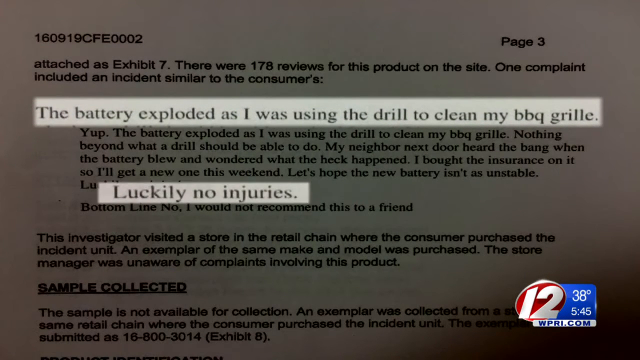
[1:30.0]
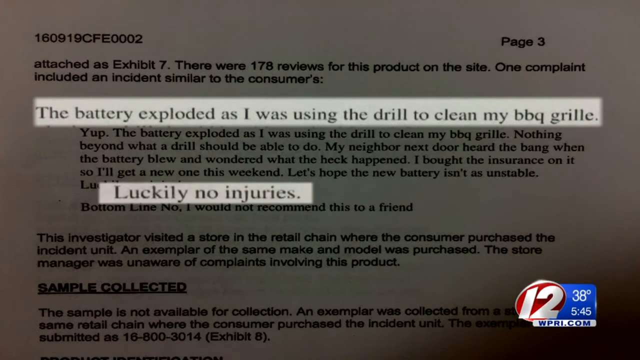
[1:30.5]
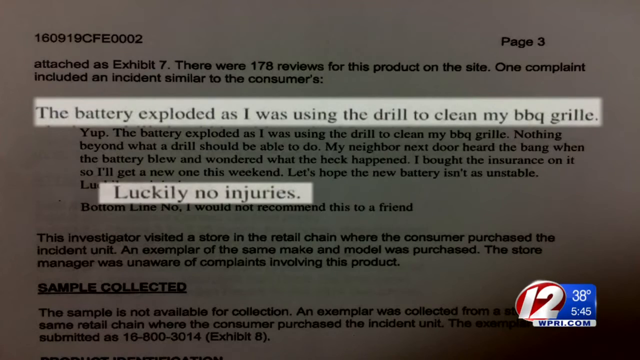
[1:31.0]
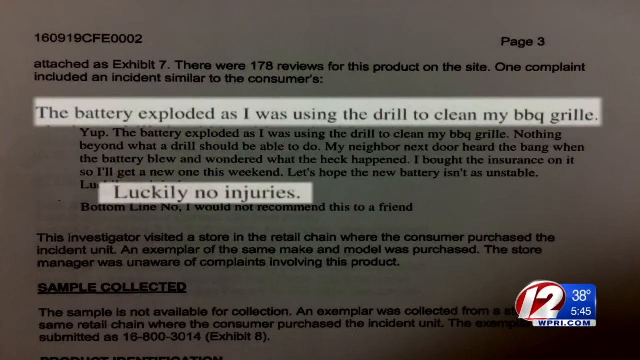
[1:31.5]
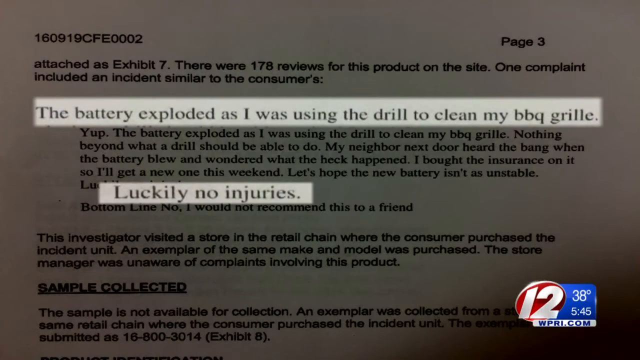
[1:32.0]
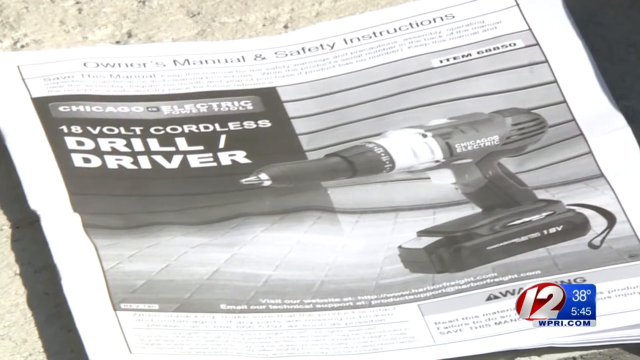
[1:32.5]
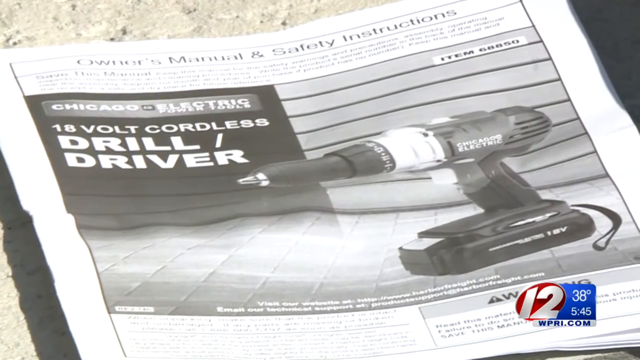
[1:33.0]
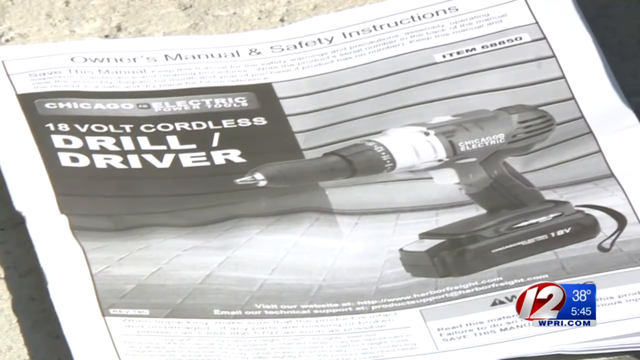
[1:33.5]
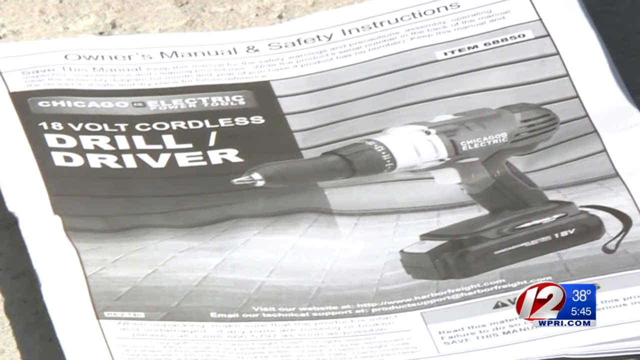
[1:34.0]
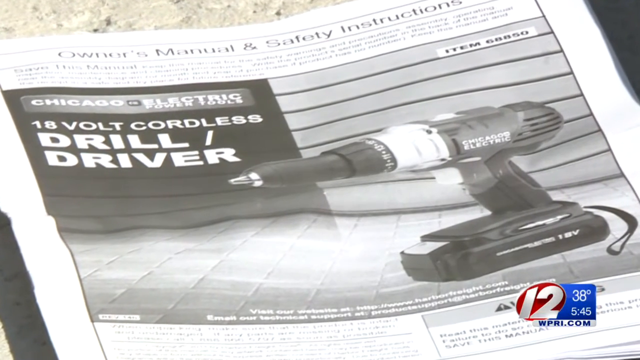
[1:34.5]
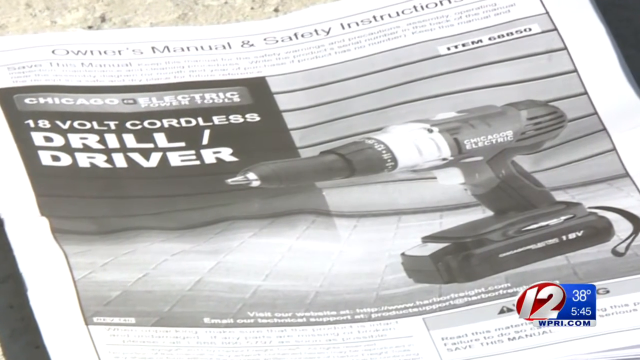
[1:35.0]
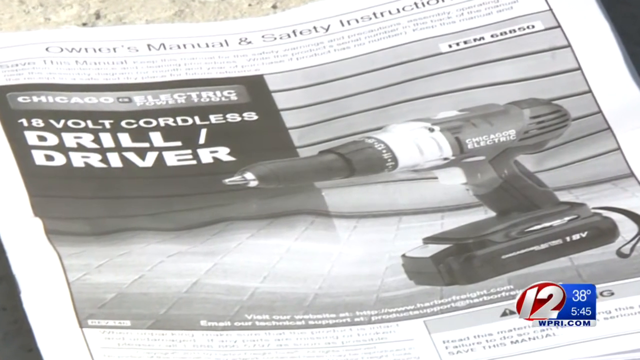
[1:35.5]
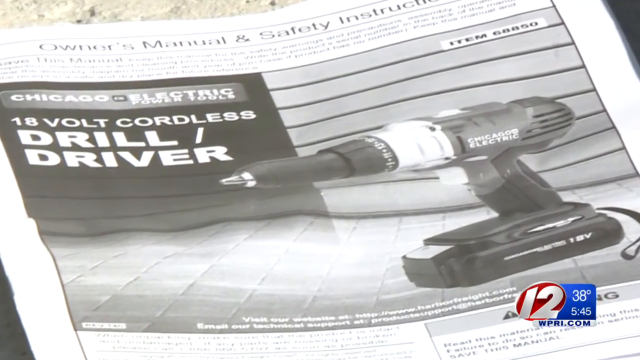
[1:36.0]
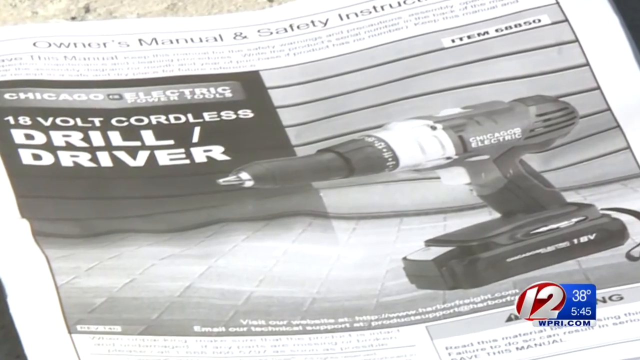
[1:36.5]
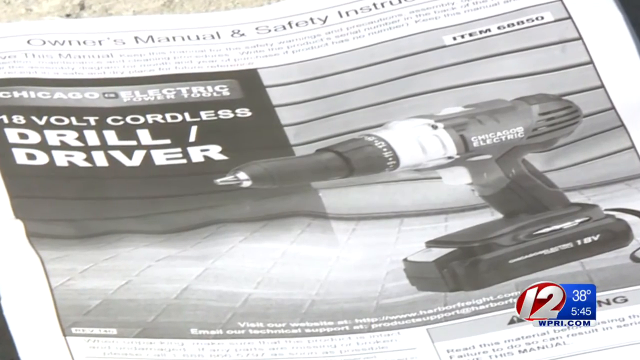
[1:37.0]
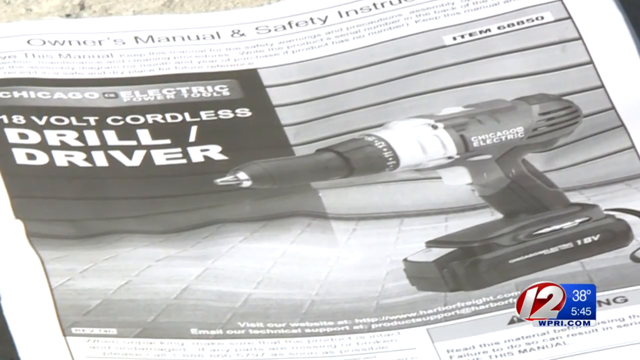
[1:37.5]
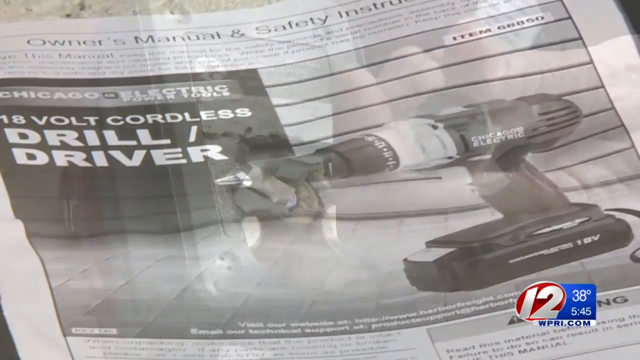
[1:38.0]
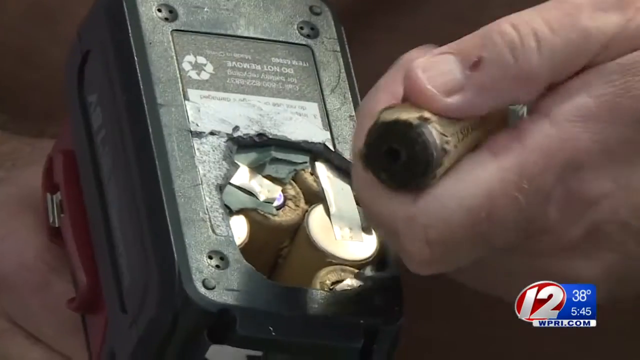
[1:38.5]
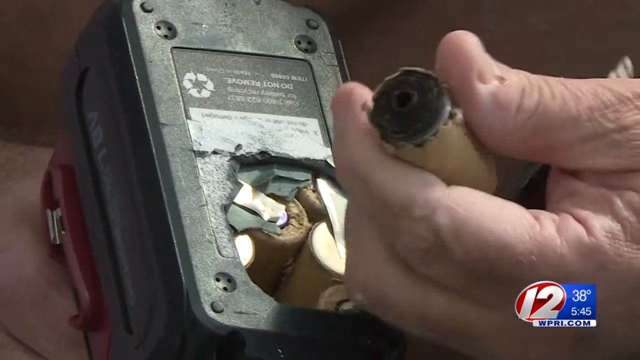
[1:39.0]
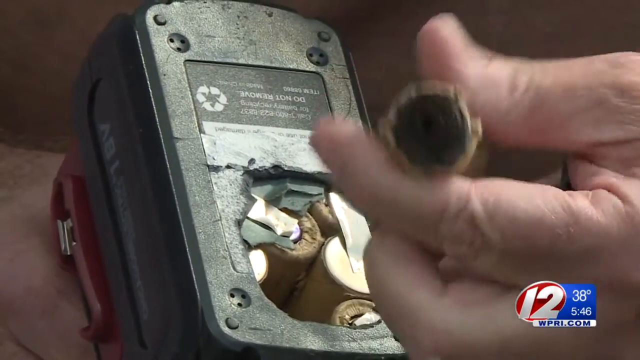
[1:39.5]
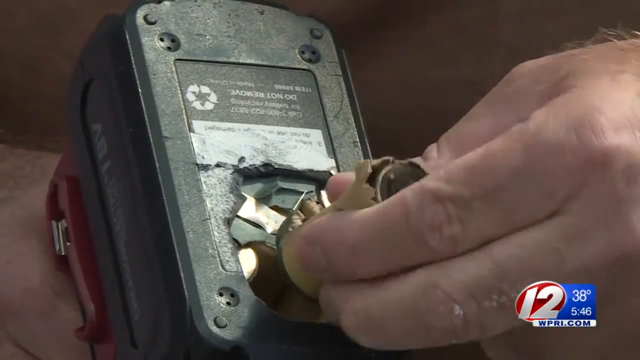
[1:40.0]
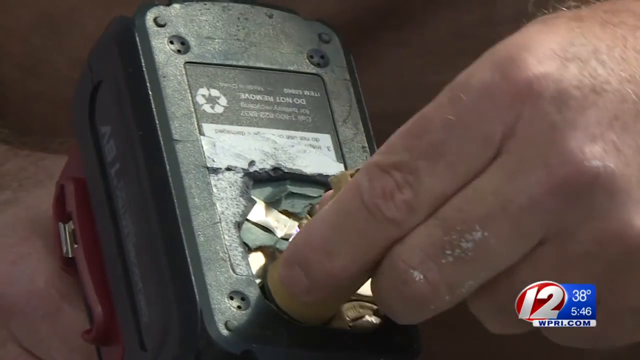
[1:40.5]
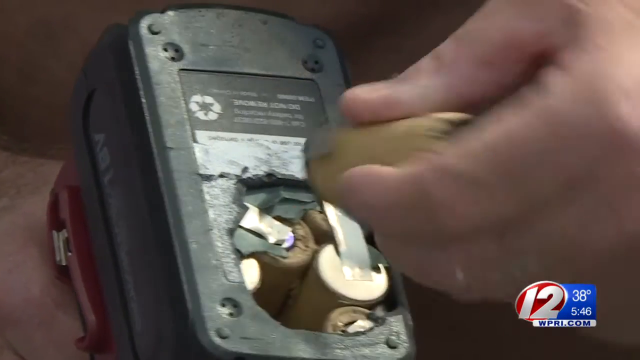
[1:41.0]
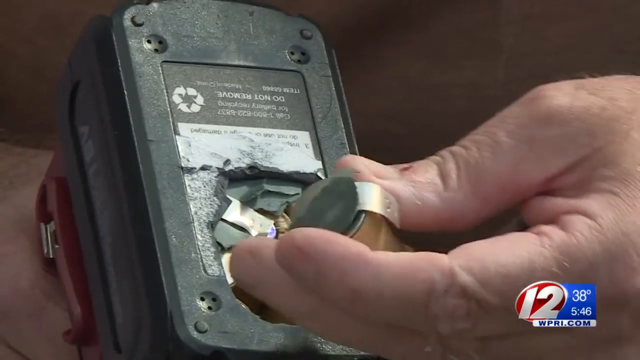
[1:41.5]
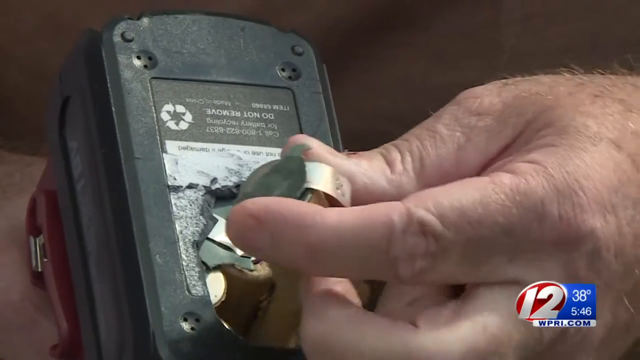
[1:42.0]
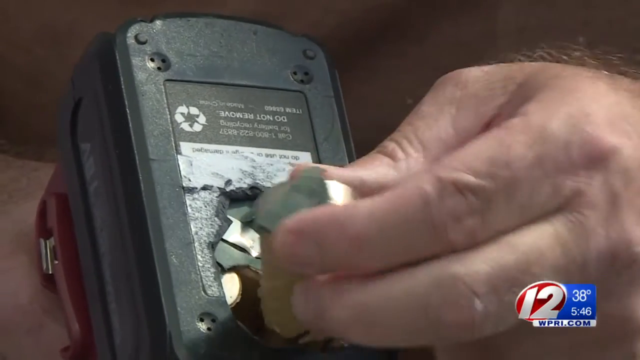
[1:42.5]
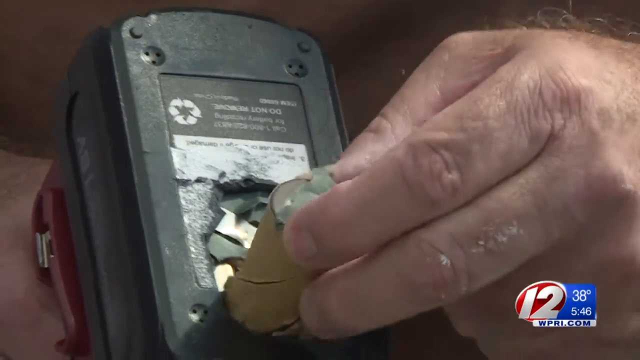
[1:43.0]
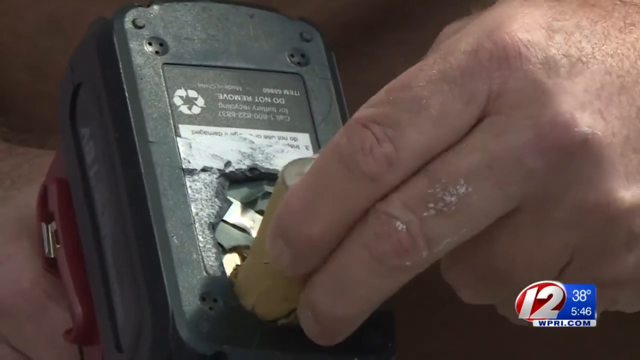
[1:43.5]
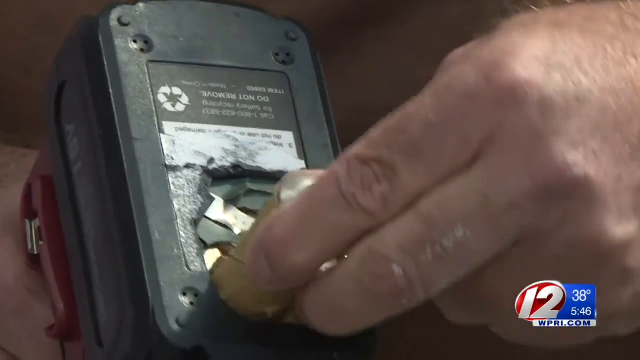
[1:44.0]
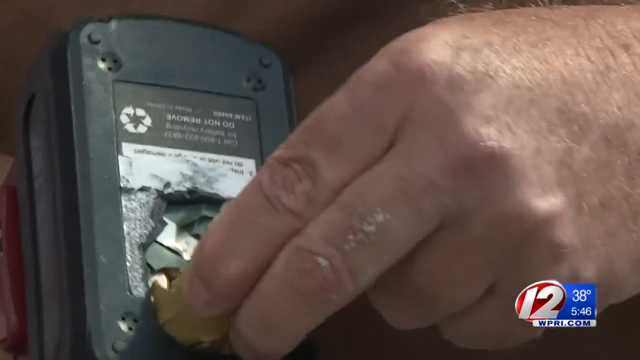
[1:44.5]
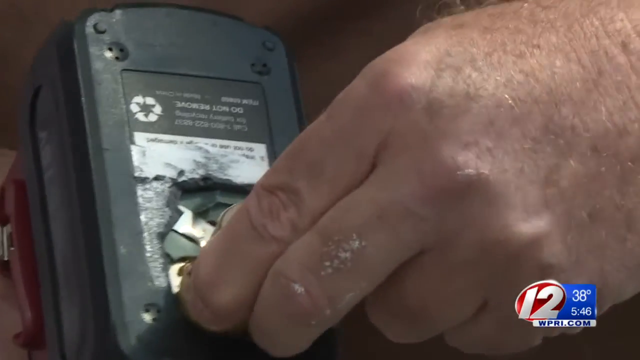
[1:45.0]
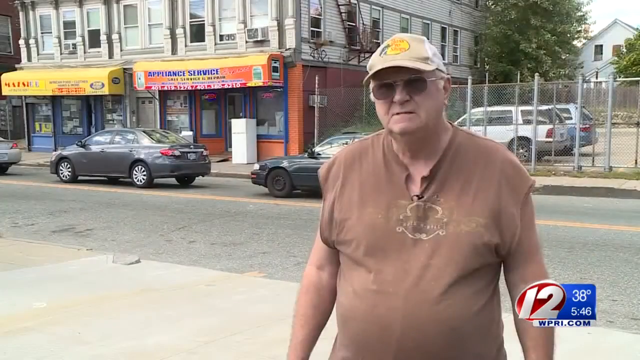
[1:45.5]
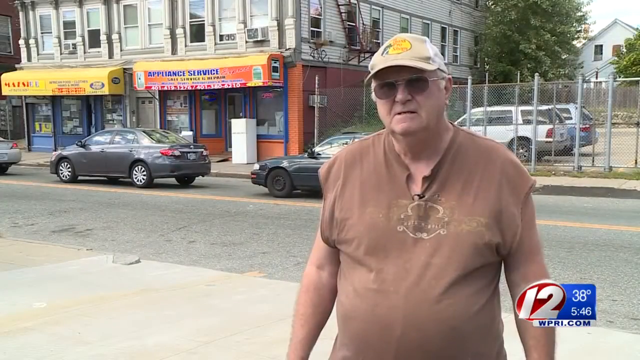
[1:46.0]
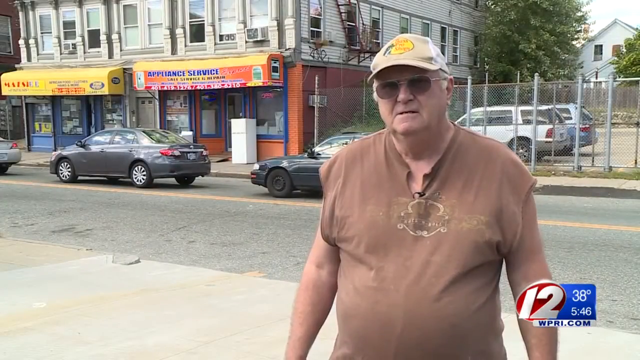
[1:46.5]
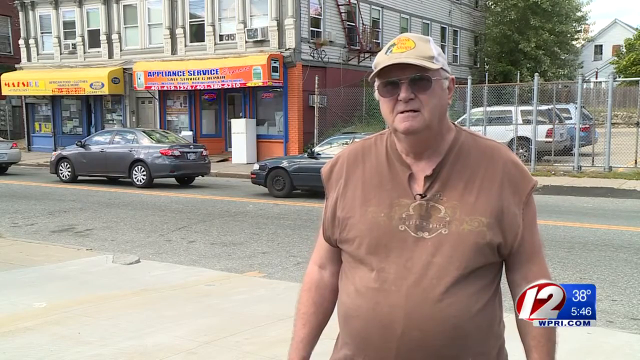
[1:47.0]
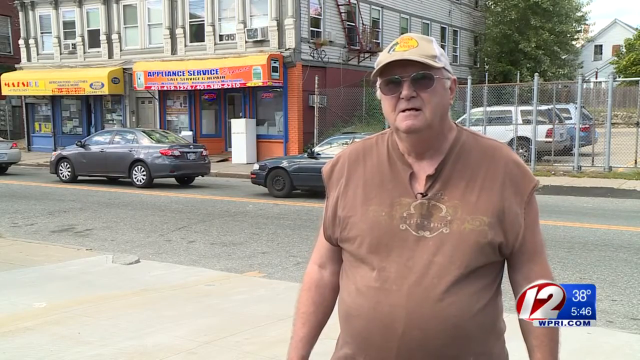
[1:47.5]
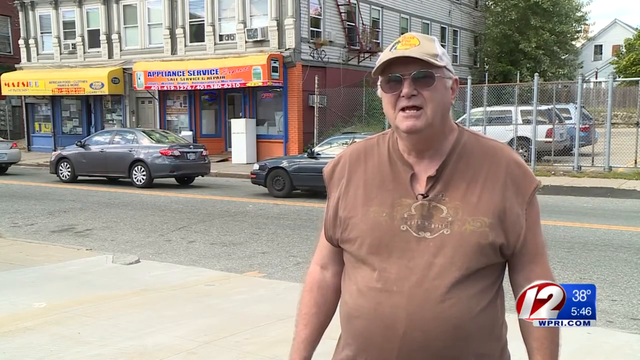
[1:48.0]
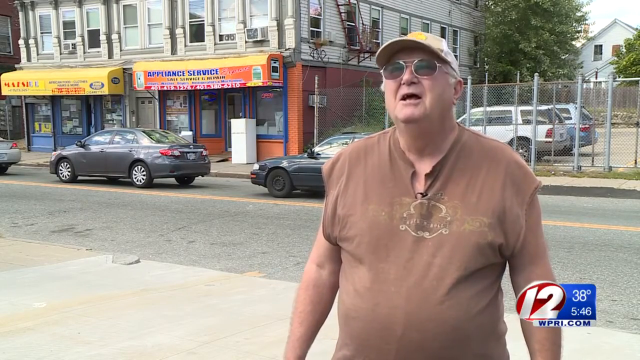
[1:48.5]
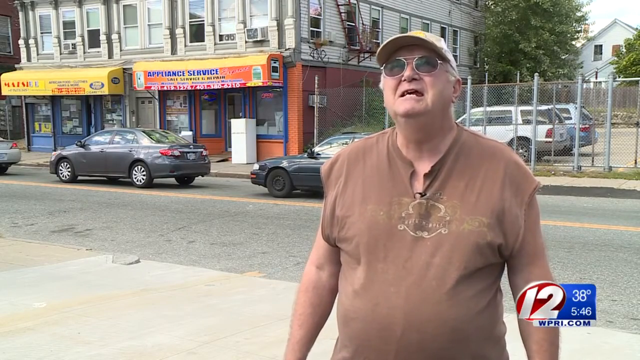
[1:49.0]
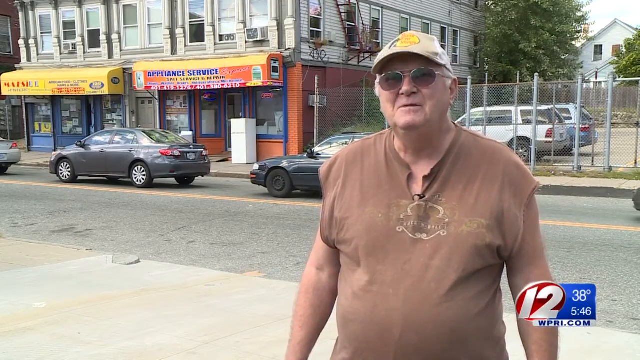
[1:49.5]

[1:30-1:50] A zoomed-in area of a document shows two areas highlighted in white while the rest of the document seems darkened. The first highlighted line says "the battery exploded as I was using the drill to clean my barbecue grill," and at the bottom the highlighted text says "luckily, no injuries." Next, a panning zoom-in shot shows what looks like an owner's manual for a drill, possibly the drill in question; the image slowly zooms into the manual and stops. It then cuts to a man holding what looks like batteries from a drill between his thumb and forefinger, showing how the battery may have exploded at the bottom of a drill. He turns the battery around and tries to put it back into the broken area at the bottom of the drill, but he seems to struggle to fit it. The video then cuts back to the man standing on the side of the road talking to the news reporter.